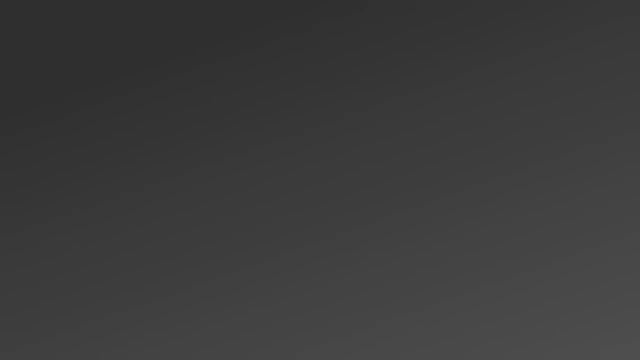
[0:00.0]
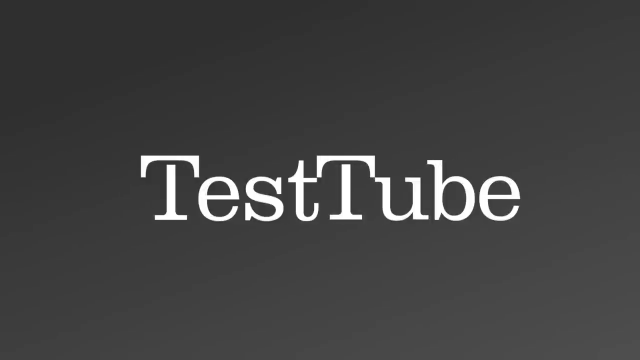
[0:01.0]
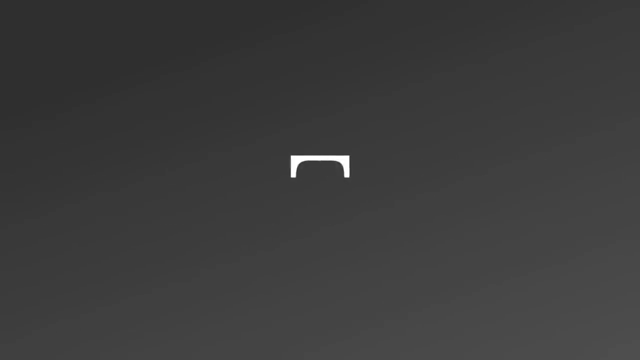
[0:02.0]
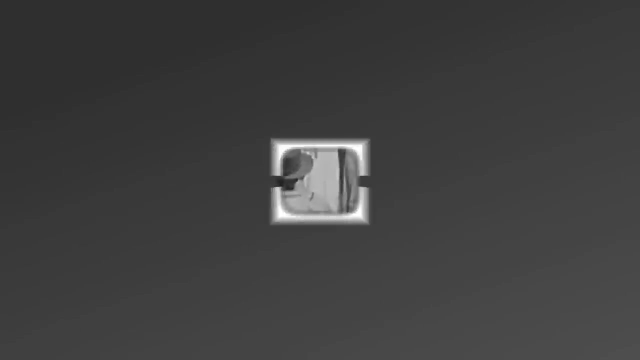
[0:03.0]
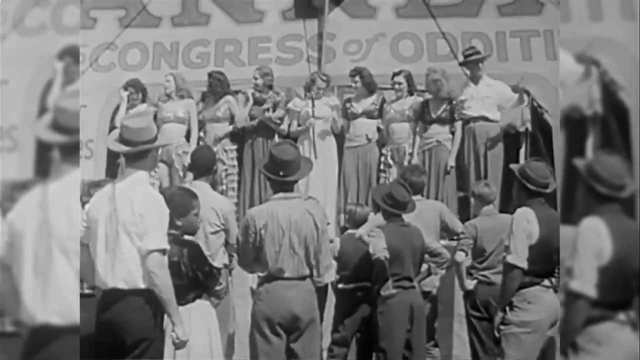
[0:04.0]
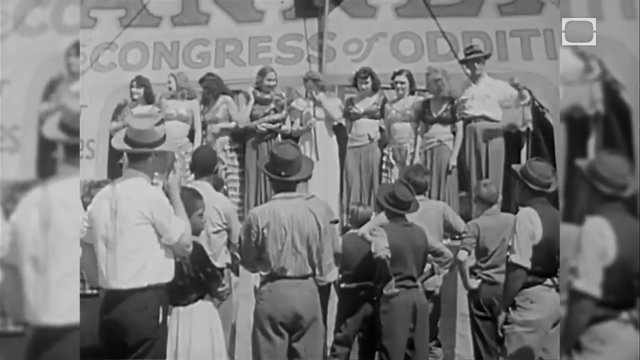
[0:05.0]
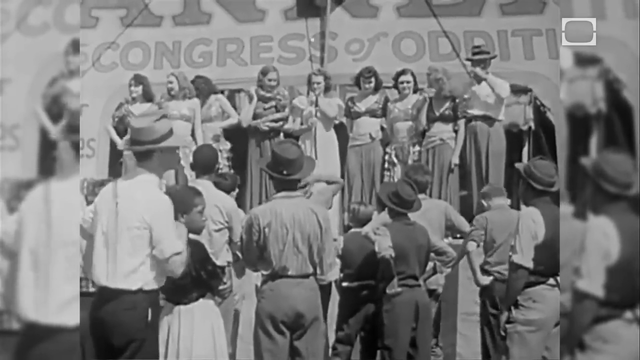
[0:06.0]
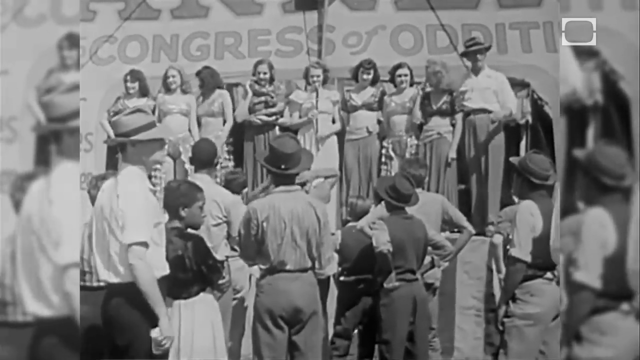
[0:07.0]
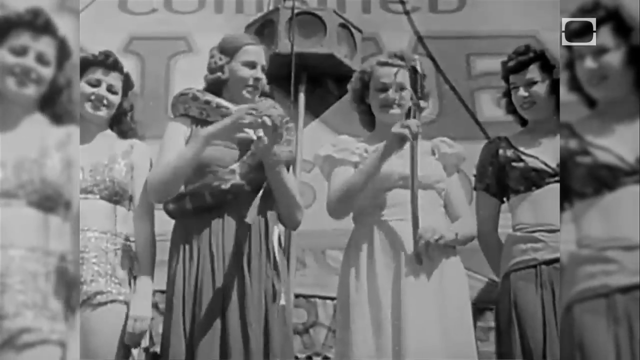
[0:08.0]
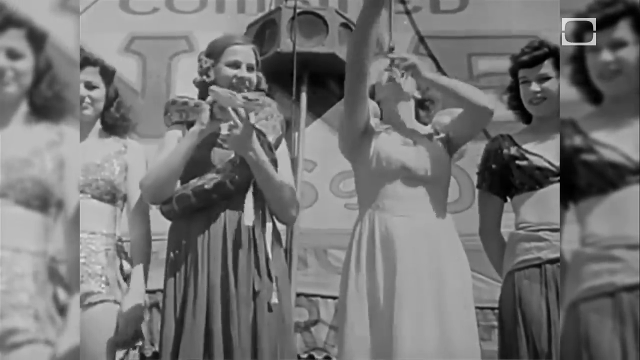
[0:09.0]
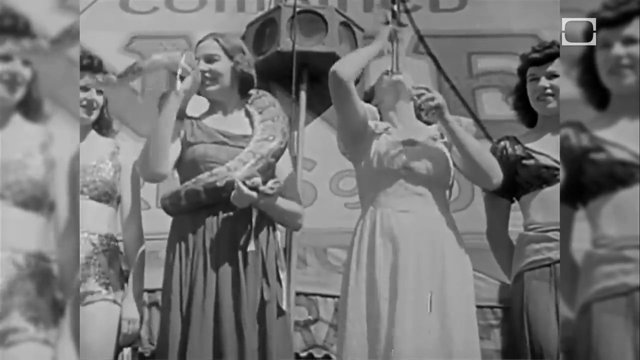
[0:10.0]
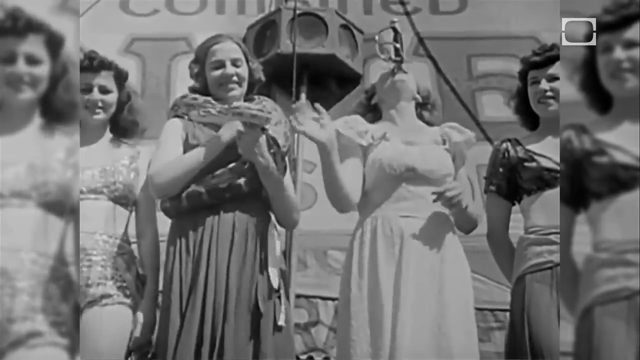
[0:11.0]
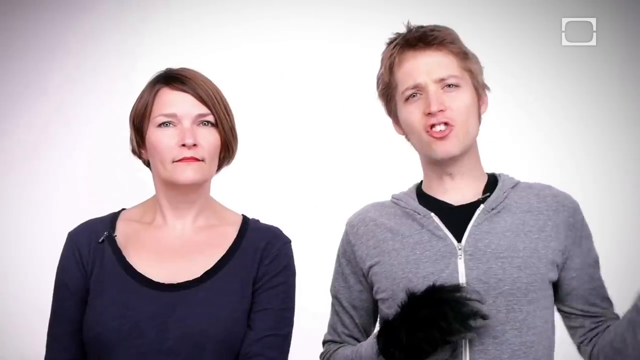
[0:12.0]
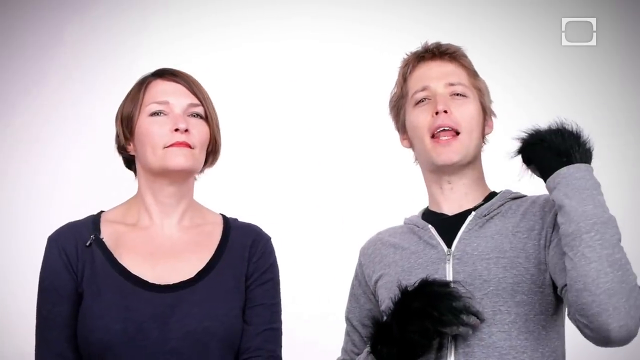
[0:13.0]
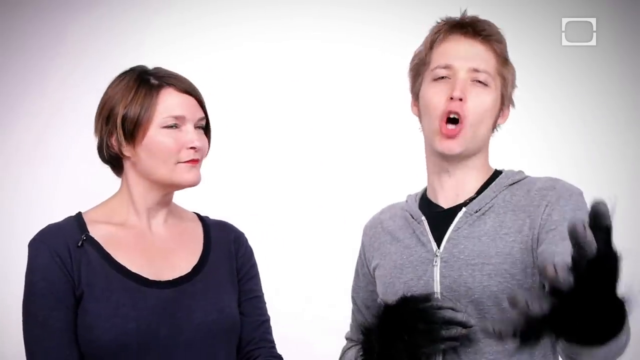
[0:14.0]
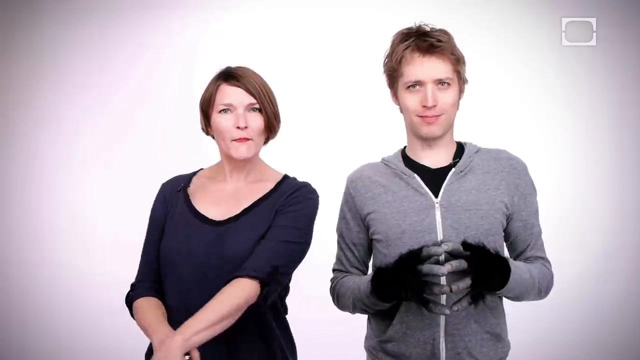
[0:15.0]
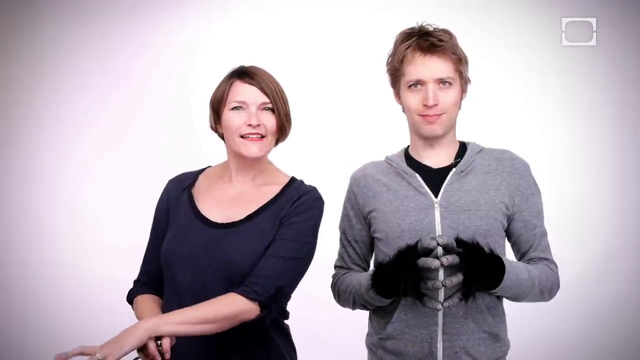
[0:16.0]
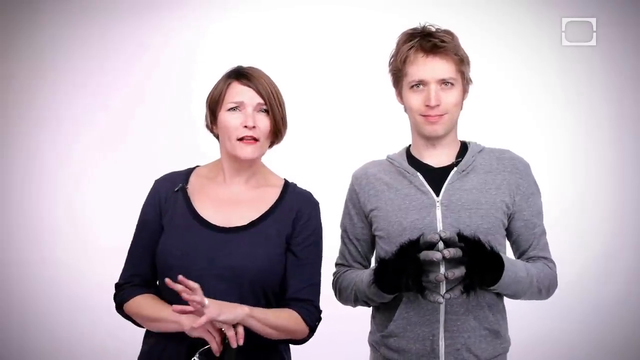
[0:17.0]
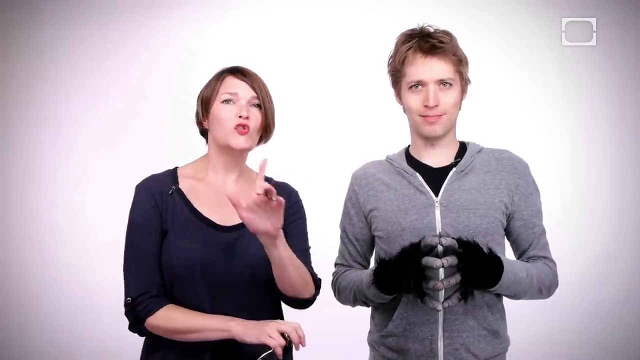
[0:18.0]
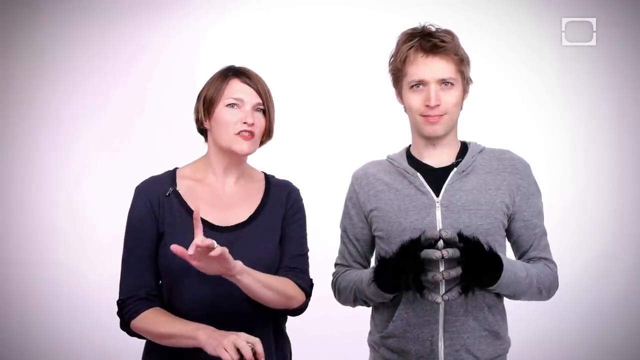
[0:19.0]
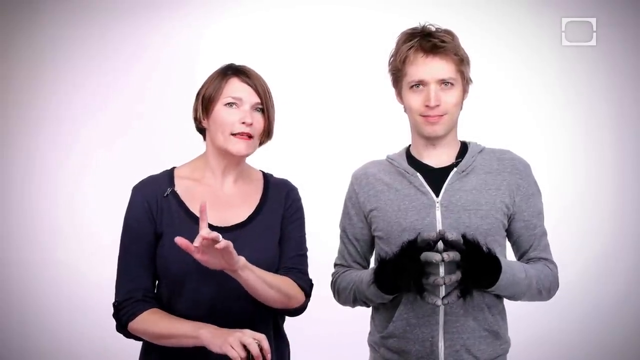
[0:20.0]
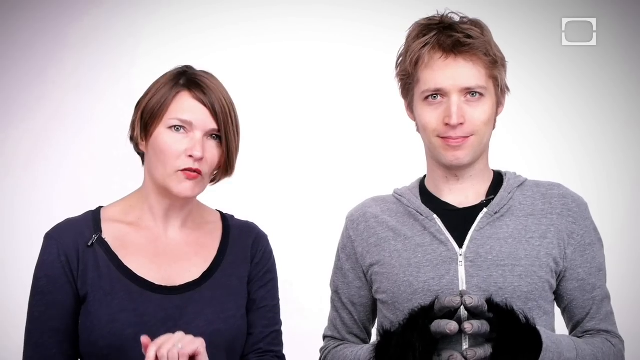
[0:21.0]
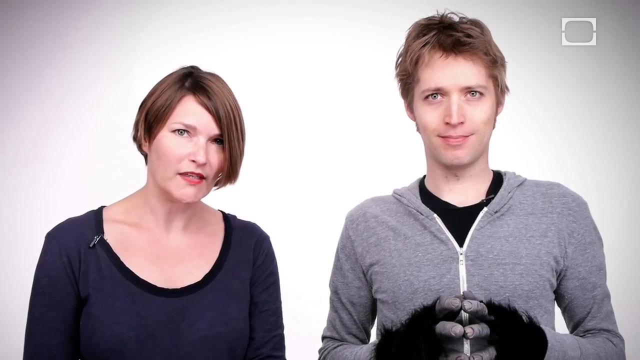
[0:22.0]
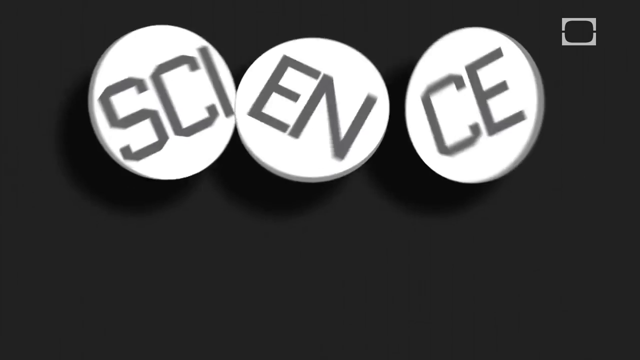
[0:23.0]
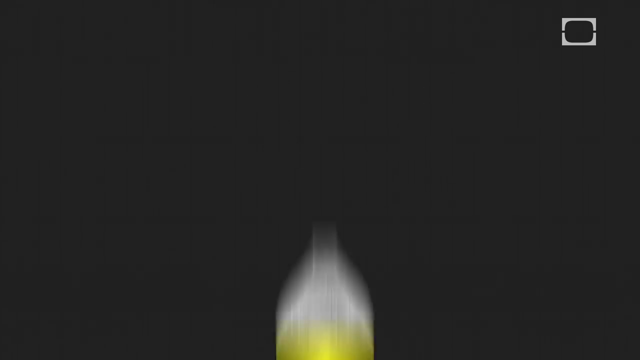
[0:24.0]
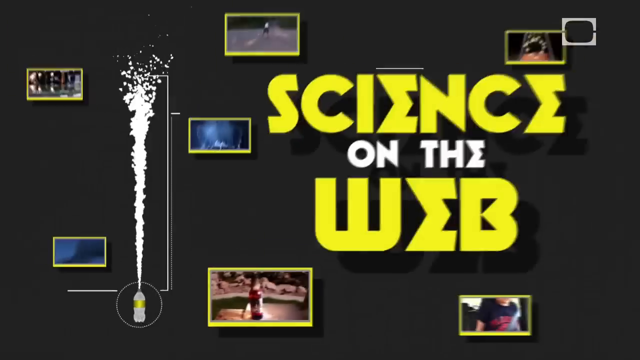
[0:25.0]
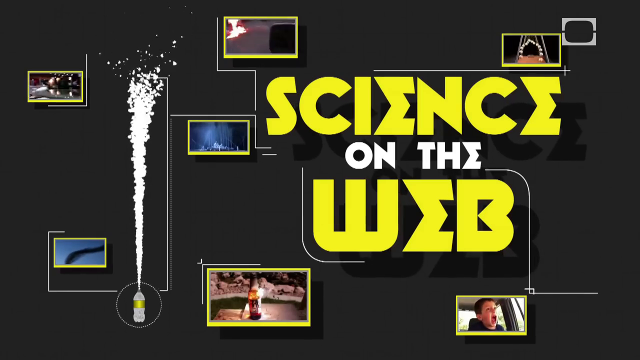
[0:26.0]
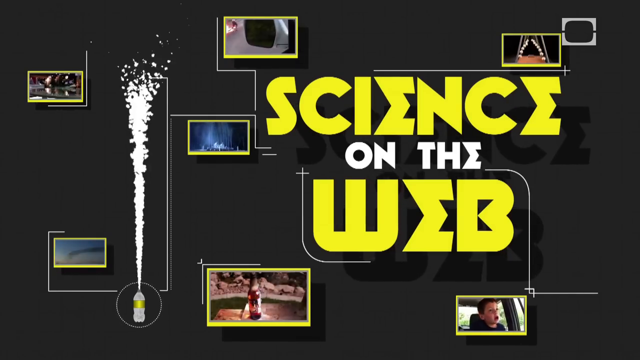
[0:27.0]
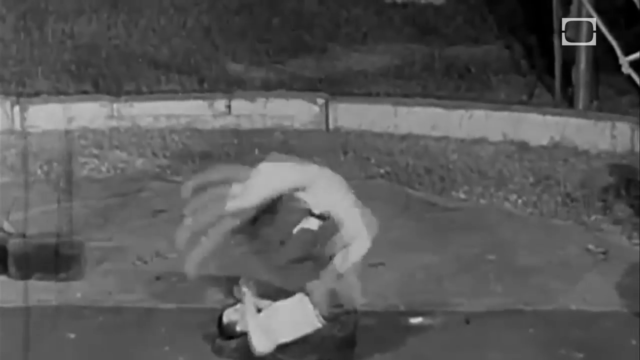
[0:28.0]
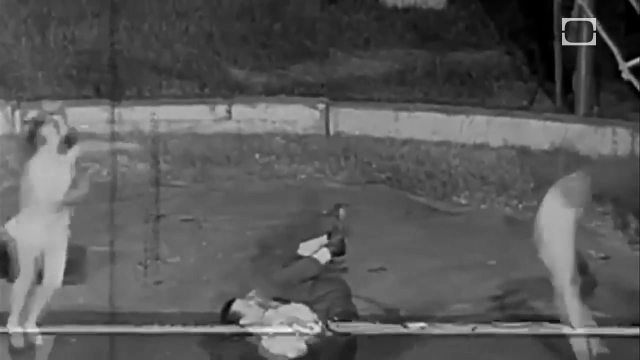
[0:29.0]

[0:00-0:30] The video opens with the words "Test Tube," then cuts to a very vintage black-and-white film. "Congress of Oddities" appears in the background, and there is a stage with women standing next to each other. At the right end, an older man wearing a hat stands next to the women. In front of the stage are men, many of them wearing hats, facing the women on stage. It looks like a circus exhibit: one of the women on stage puts a full sword in her mouth, and another woman standing to her left has a boa constrictor around her body that she is tending to. It appears to be an old clip of a traveling carnival or circus, with many people watching the performance on stage. The video then cuts to a present-day man and woman, the woman on the right and the man on the left. The man wears fake gorilla-like gloves that are very hairy, with black hair and fingertips shaped like a gorilla's fingers.